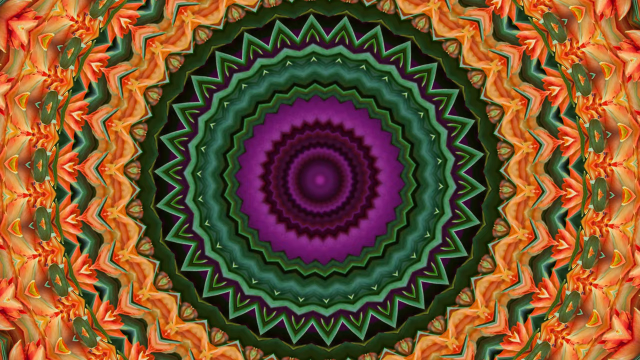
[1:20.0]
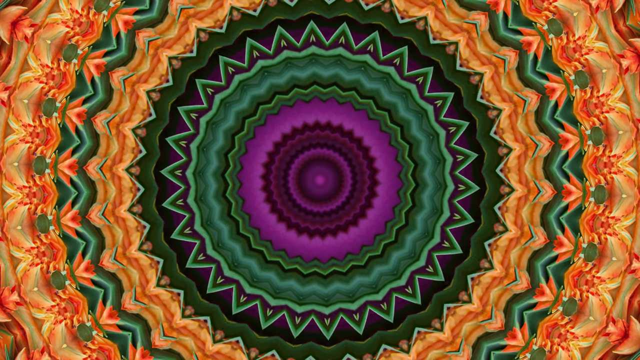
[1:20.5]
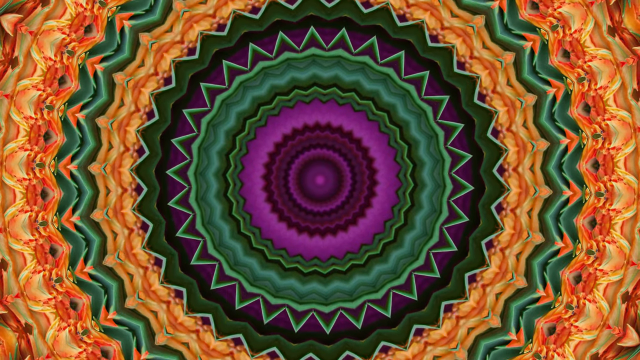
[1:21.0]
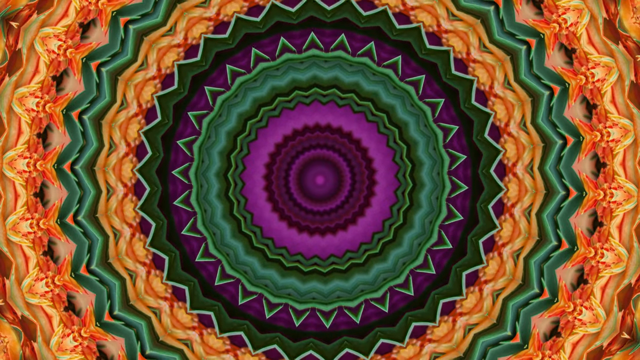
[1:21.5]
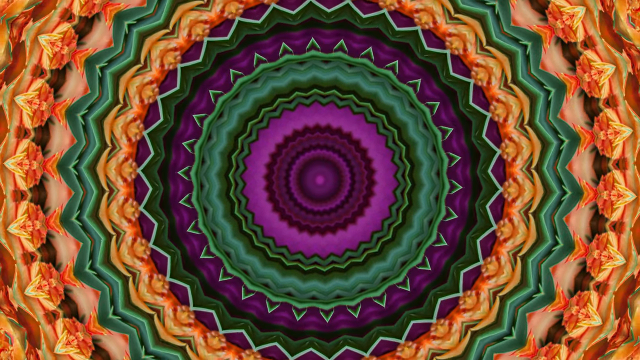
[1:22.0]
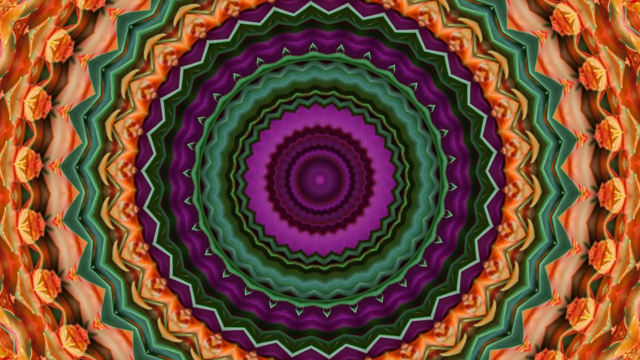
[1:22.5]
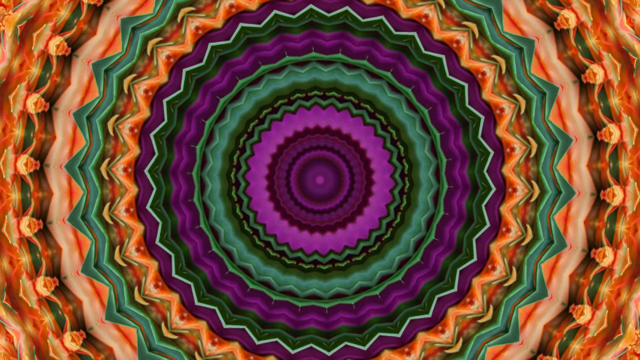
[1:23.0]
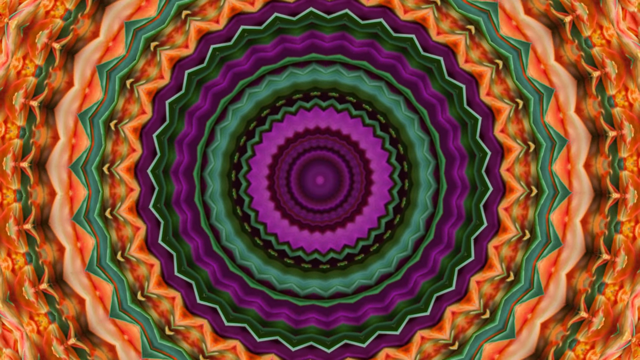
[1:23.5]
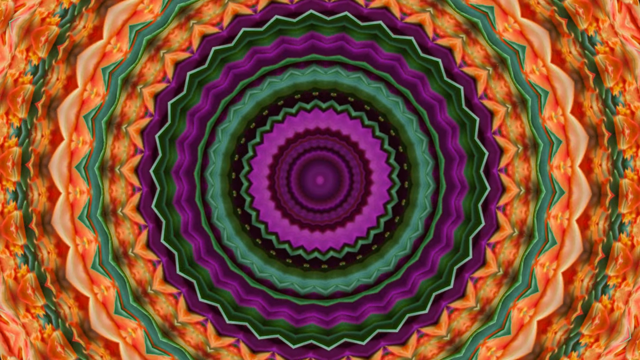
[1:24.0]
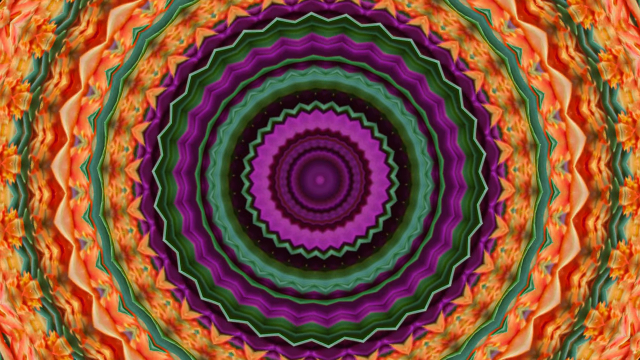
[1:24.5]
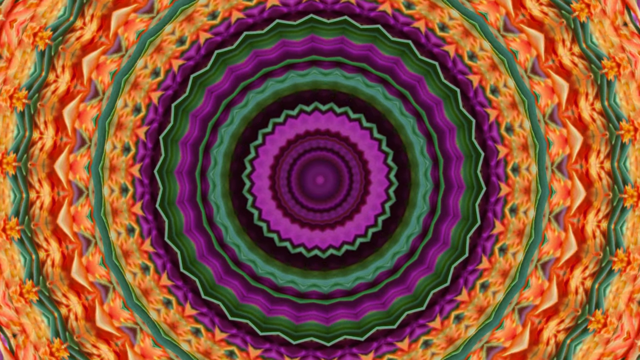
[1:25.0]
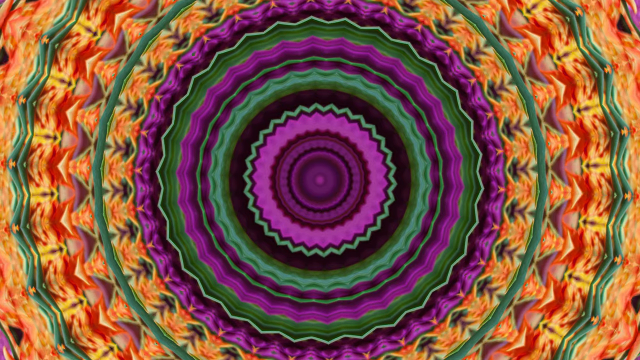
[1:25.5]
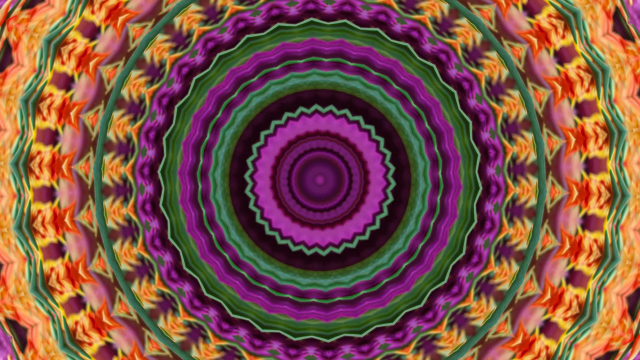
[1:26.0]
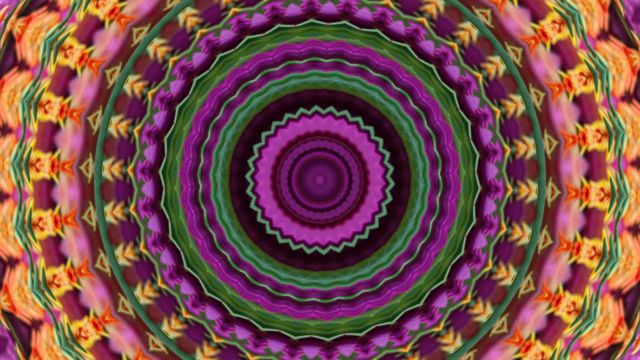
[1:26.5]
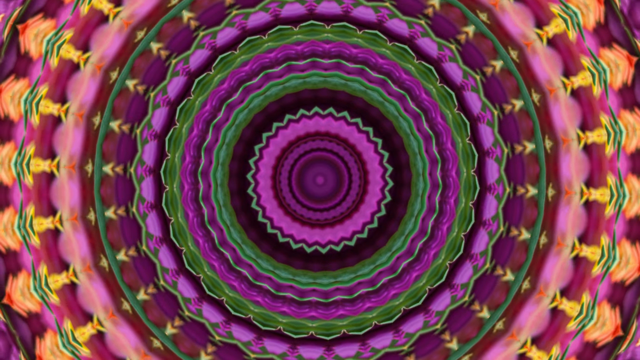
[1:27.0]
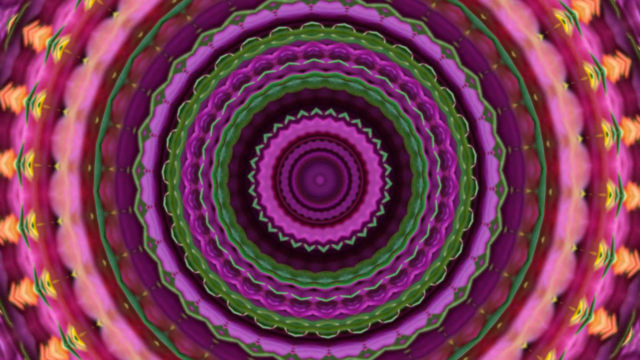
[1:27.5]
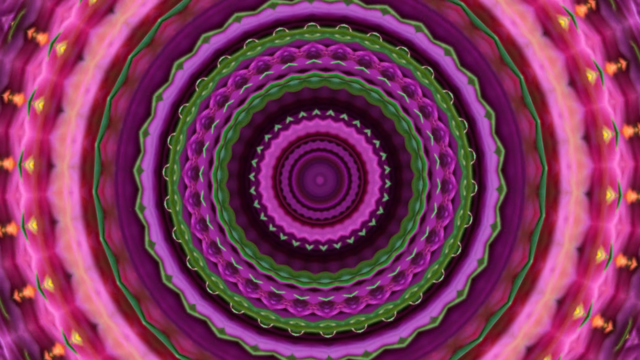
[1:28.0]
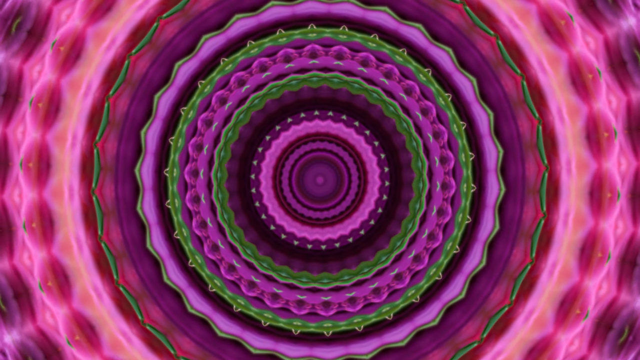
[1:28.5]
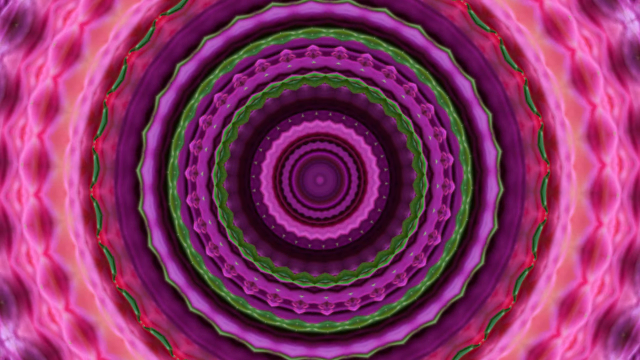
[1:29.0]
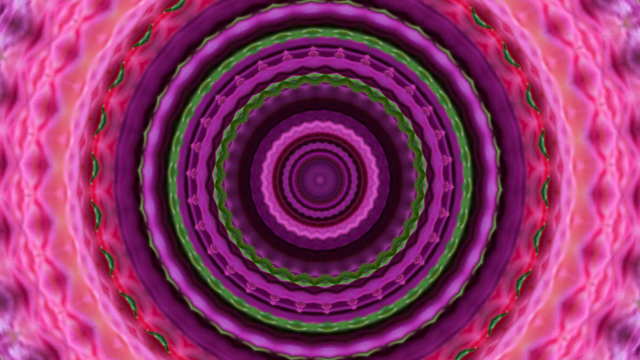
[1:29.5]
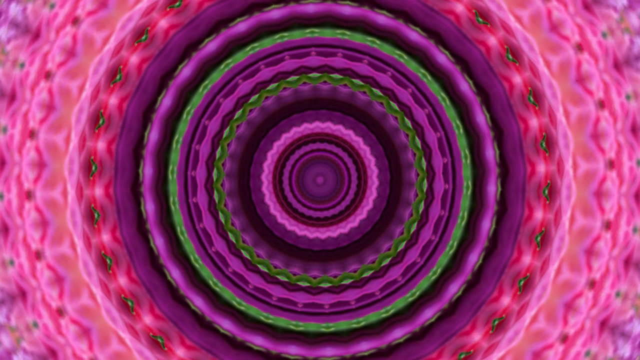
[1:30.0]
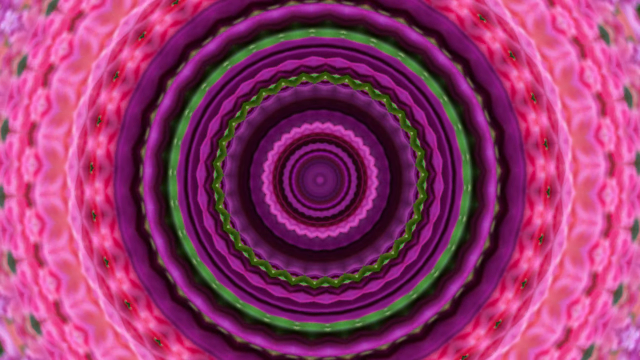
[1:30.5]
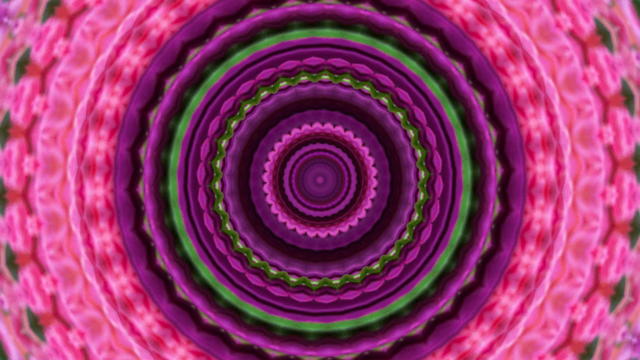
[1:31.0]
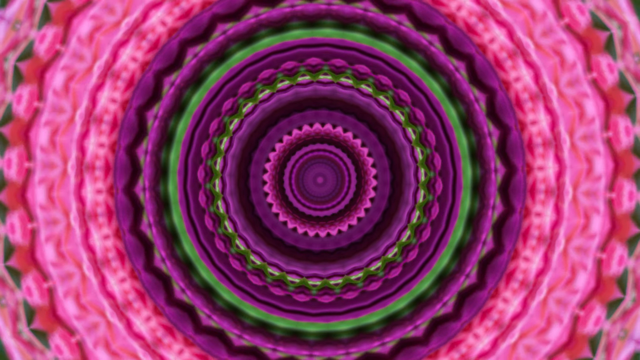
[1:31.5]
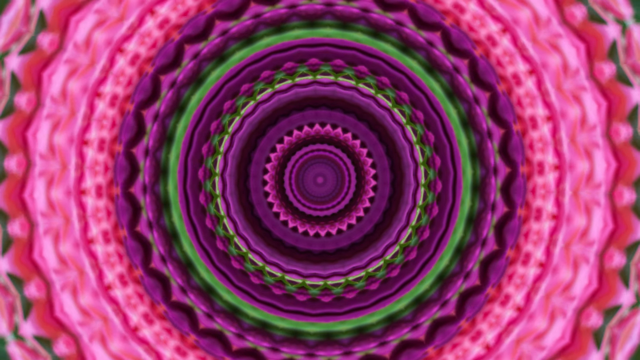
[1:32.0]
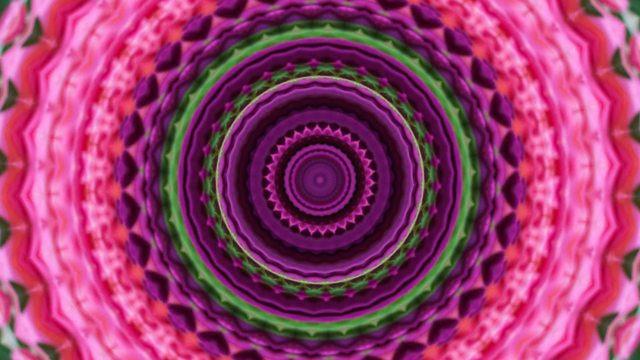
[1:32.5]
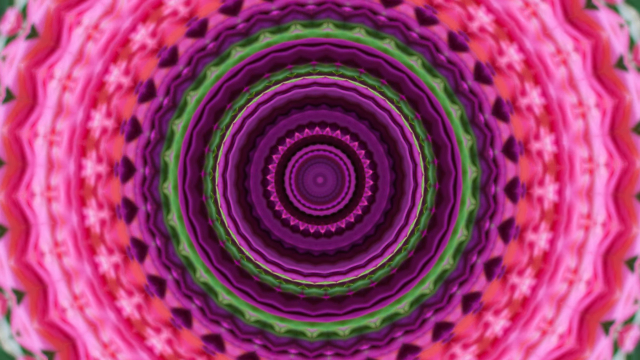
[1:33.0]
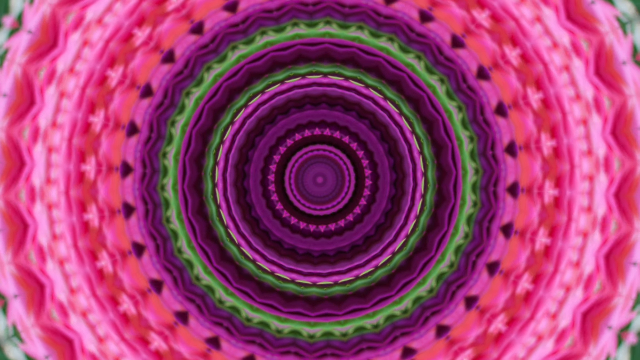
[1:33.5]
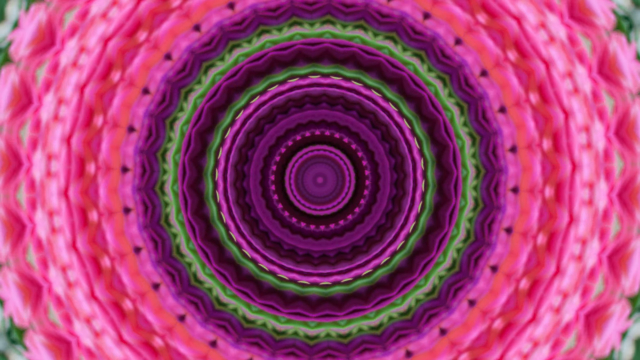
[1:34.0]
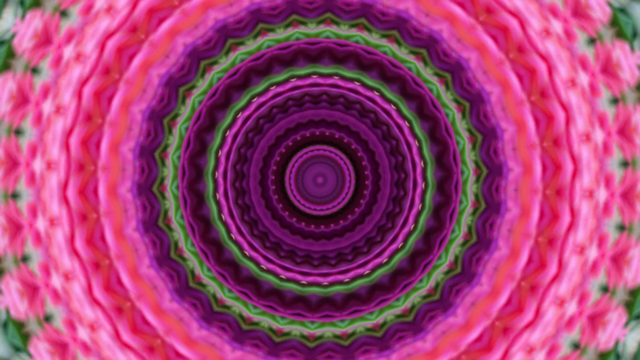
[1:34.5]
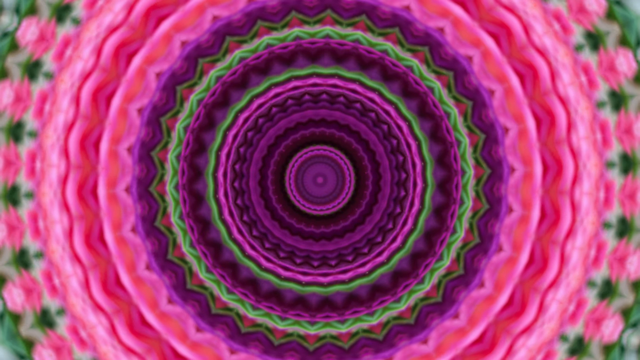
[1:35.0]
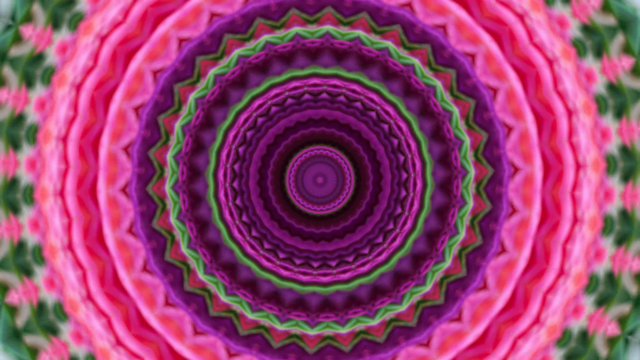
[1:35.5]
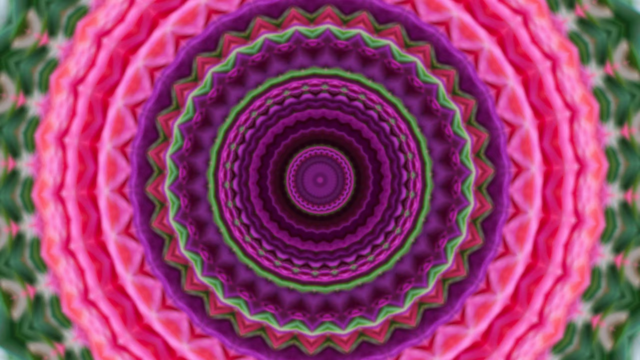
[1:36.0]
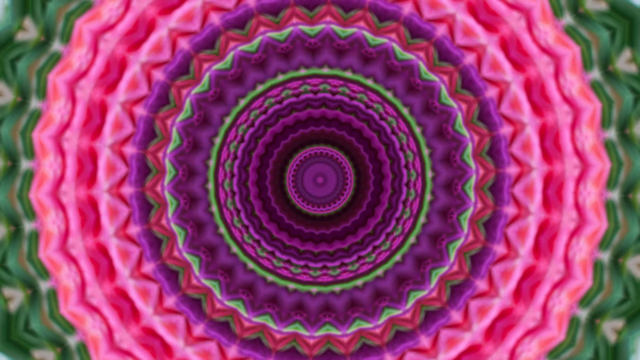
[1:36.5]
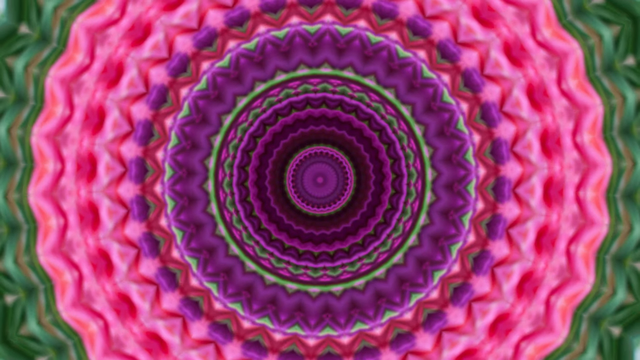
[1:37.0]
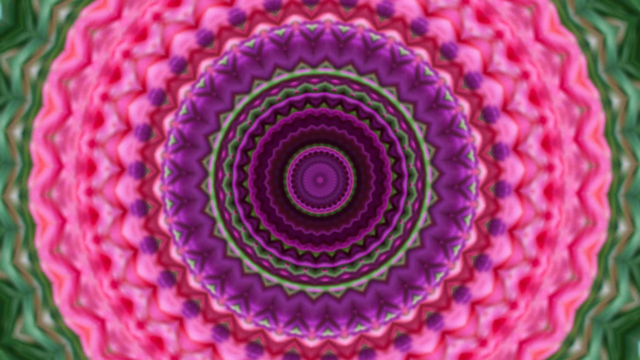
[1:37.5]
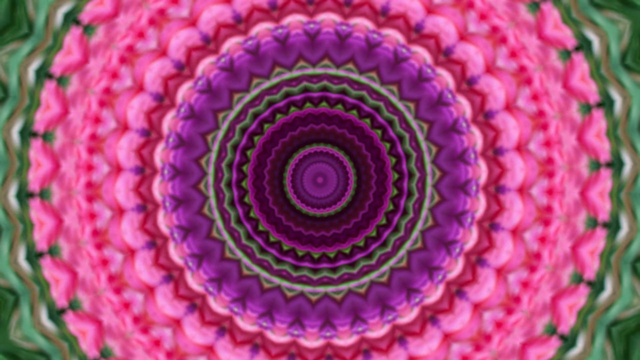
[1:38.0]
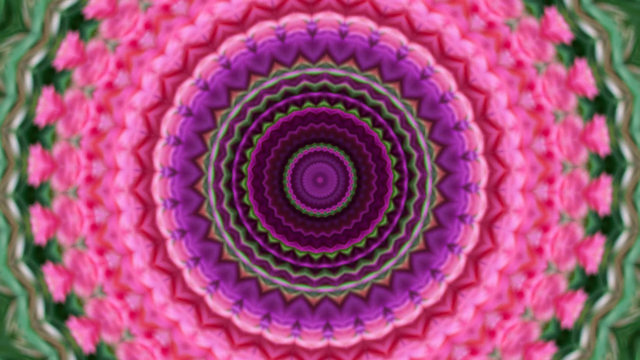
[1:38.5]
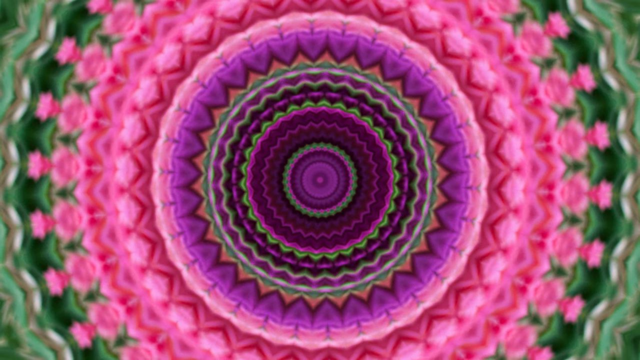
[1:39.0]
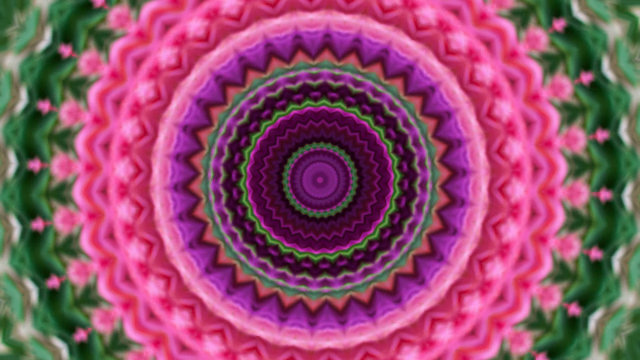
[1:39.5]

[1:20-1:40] The image continues changing and flowing with new colors. The outside seems far more intricate than the center. The center is still purple and green while the outside changes into different colors that morph together. Gradually it turns more pink and almost looks like a neon sign with how bright it is. The new shapes look more squiggly than sharp, and there seem to be small linked boxes inside the design. Some mint green forms on the outer circles, seemingly following a triangular format. The green outer ring grows larger and larger, engulfing the pink part of the ring that was taking up the majority of the center. The colors seem to keep getting brighter and brighter.